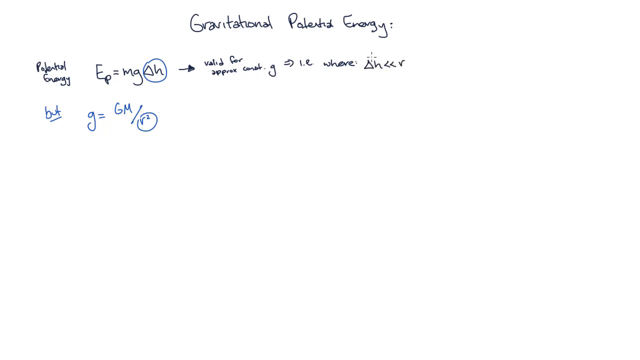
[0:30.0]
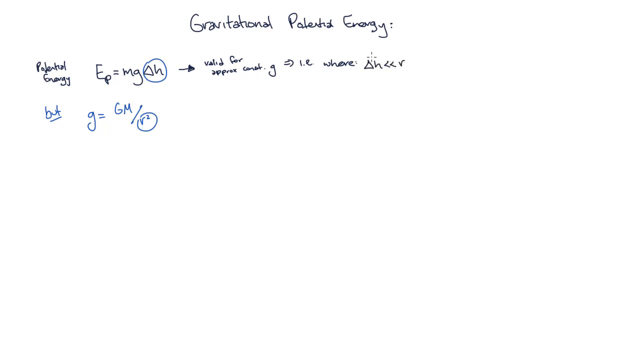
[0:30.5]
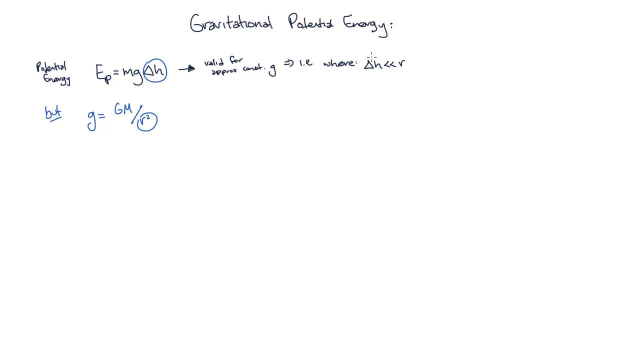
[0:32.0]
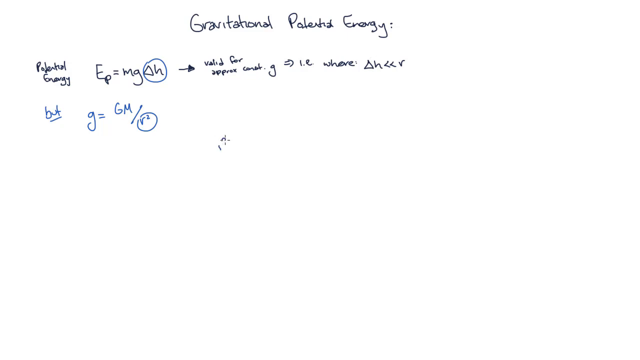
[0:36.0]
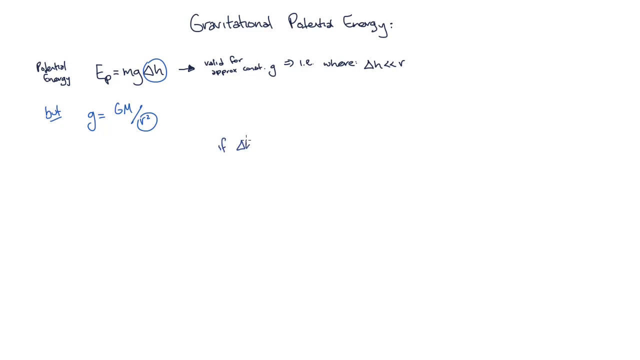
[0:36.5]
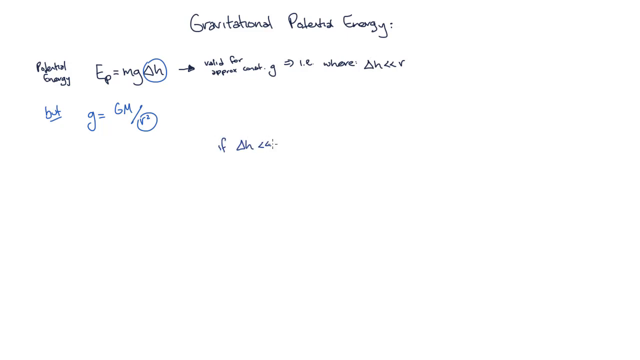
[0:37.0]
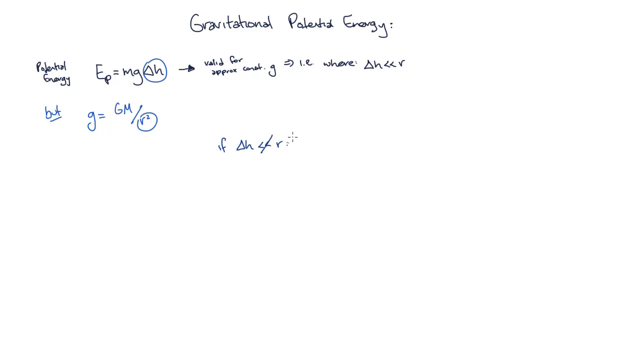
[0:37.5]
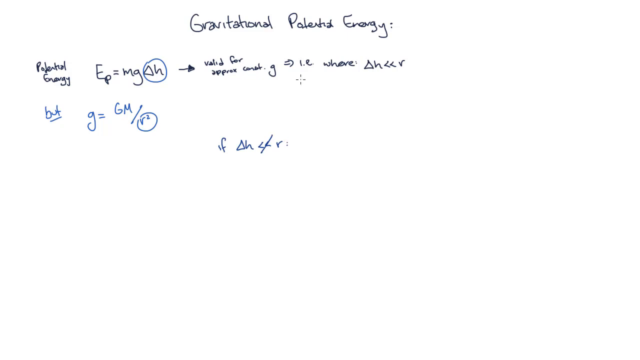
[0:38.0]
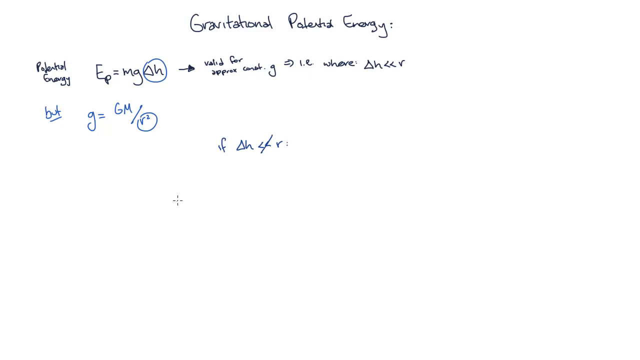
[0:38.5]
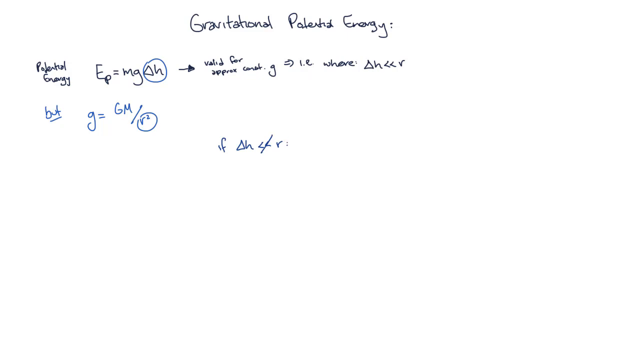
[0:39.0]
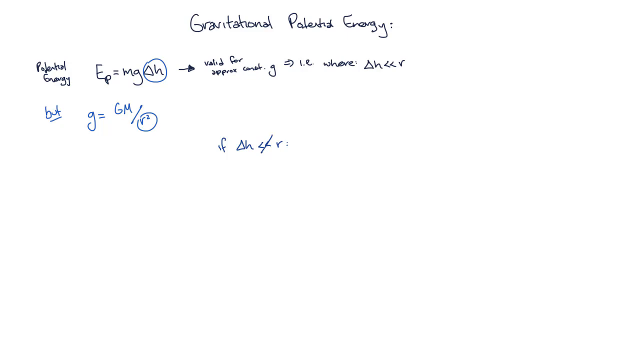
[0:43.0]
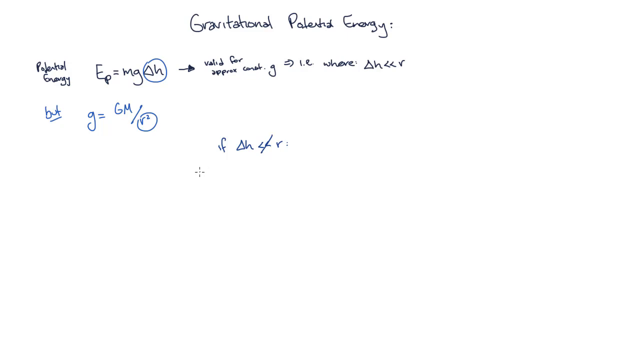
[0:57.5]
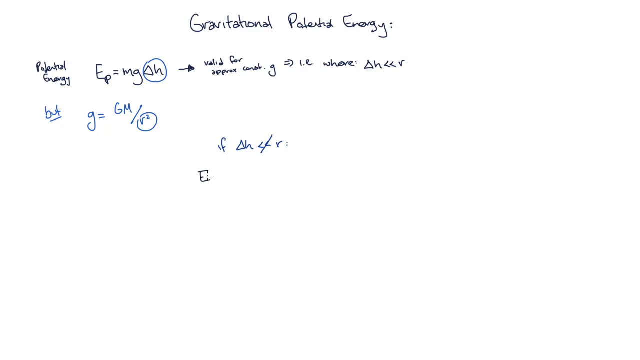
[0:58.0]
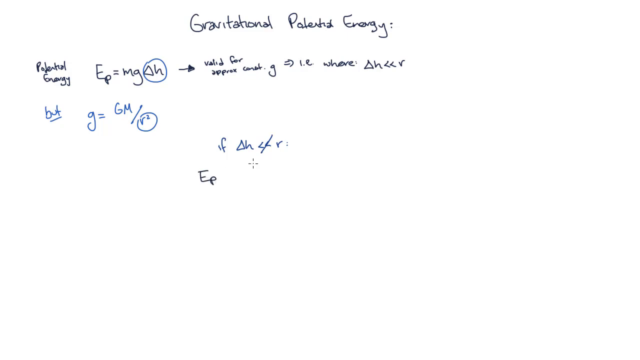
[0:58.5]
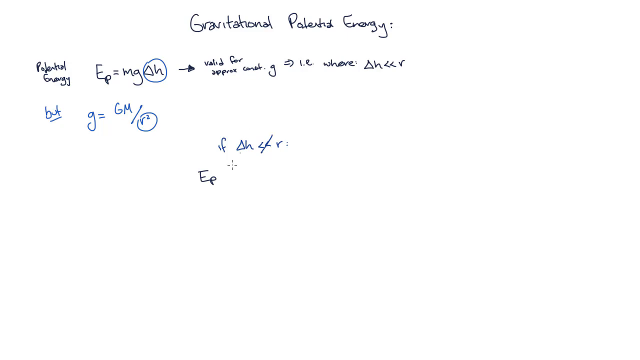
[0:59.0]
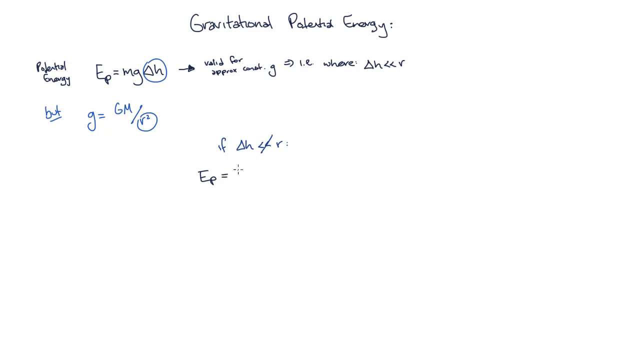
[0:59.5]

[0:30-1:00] The diagram shows key concepts of gravitational potential energy: position, height and mass, and the formula. It shows the formula for gravitational potential energy, where M stands for the mass of an object, g is the acceleration due to gravity, approximately 9.8 meters near Earth's surface, and h is the height of the object above the reference point.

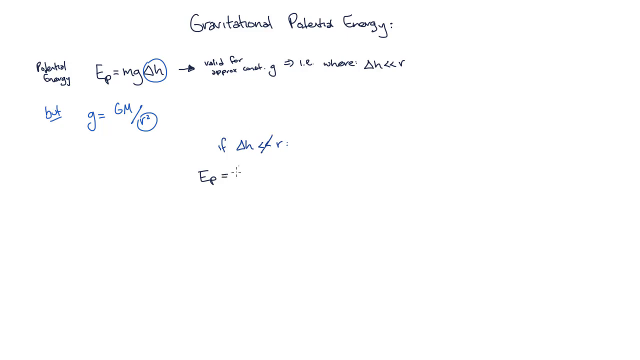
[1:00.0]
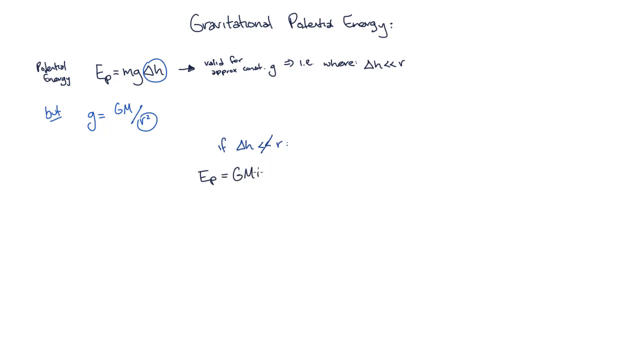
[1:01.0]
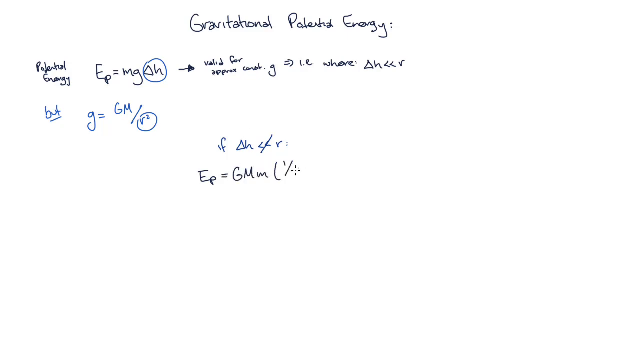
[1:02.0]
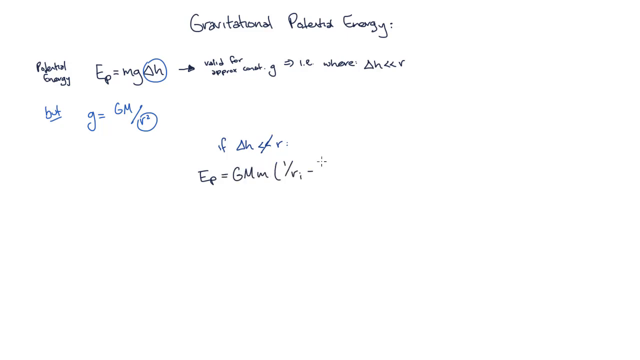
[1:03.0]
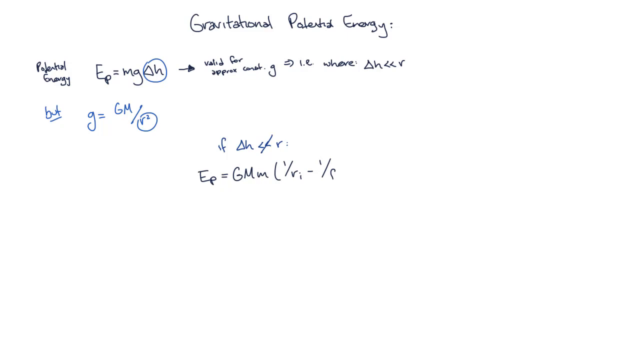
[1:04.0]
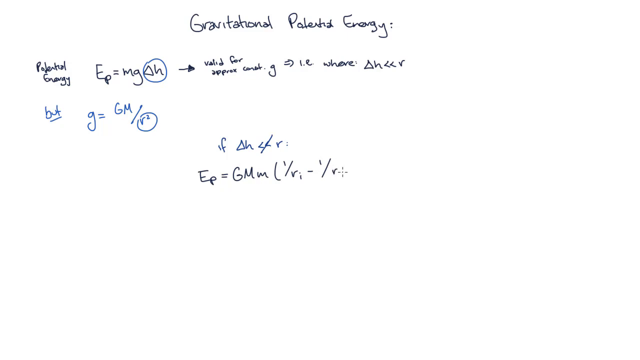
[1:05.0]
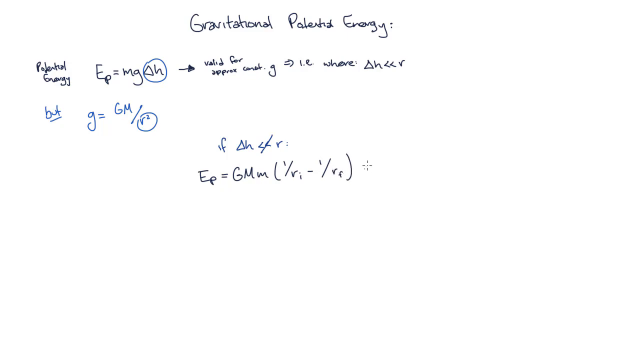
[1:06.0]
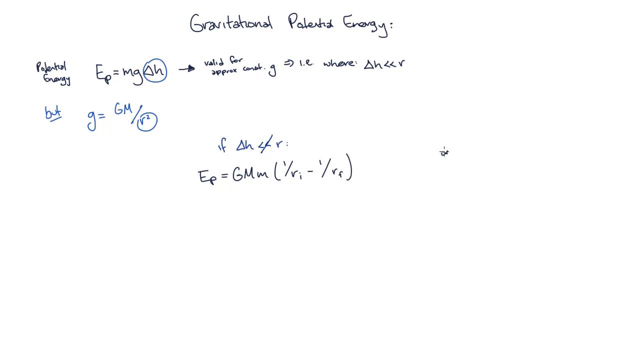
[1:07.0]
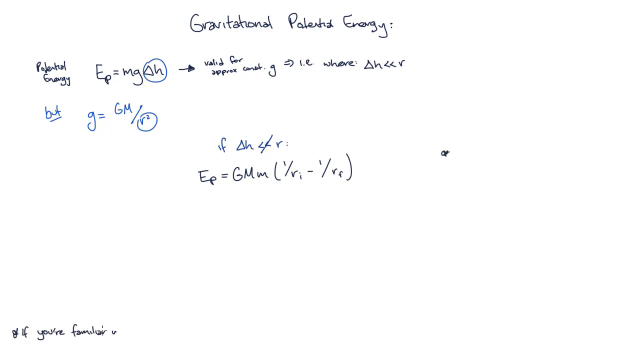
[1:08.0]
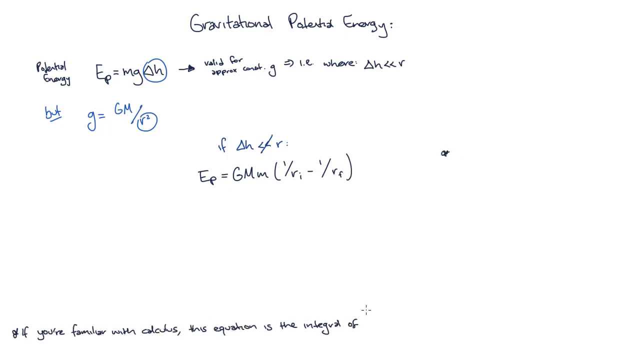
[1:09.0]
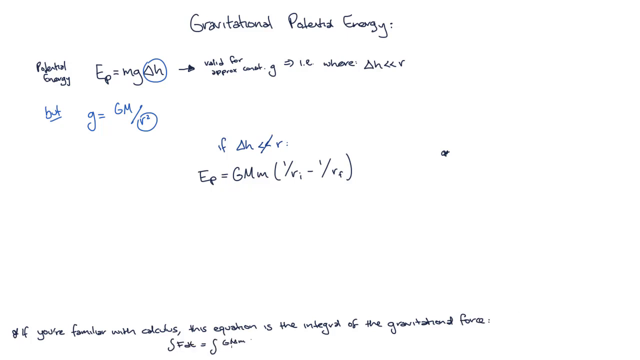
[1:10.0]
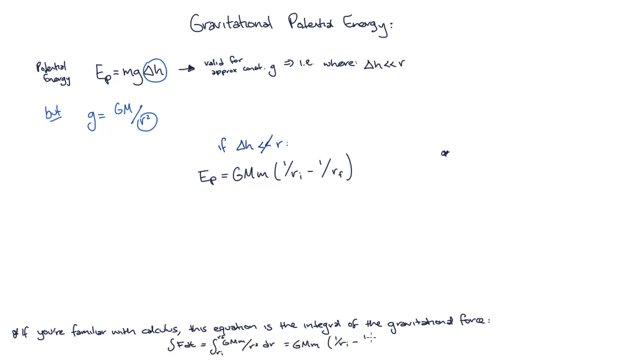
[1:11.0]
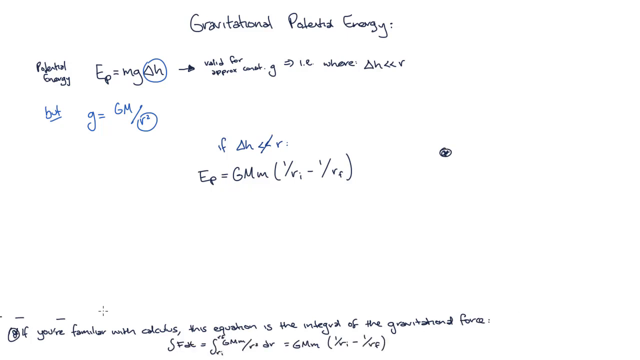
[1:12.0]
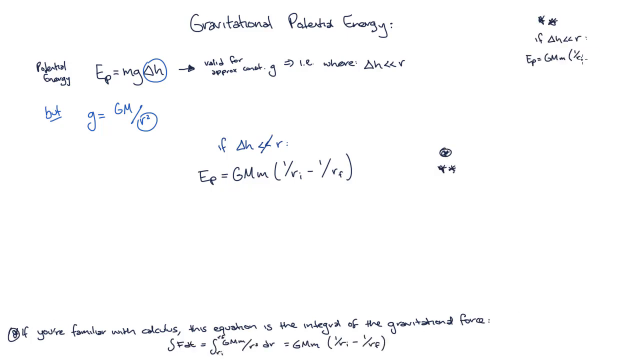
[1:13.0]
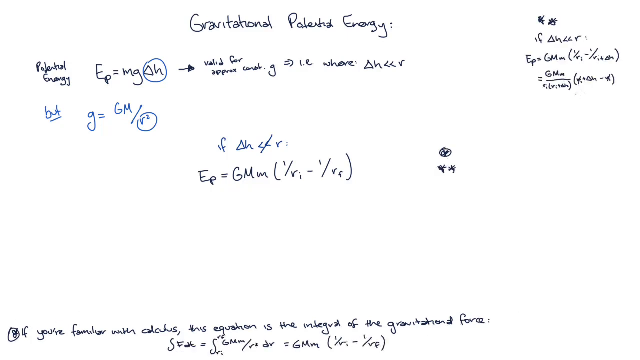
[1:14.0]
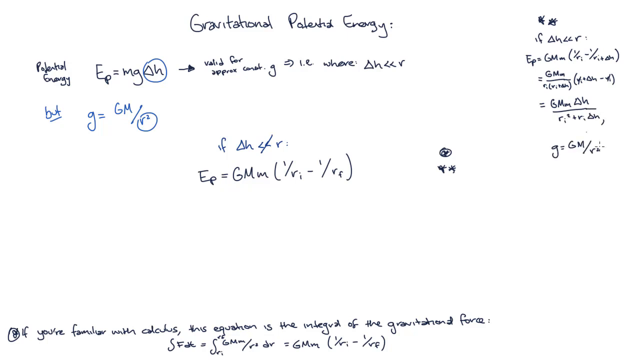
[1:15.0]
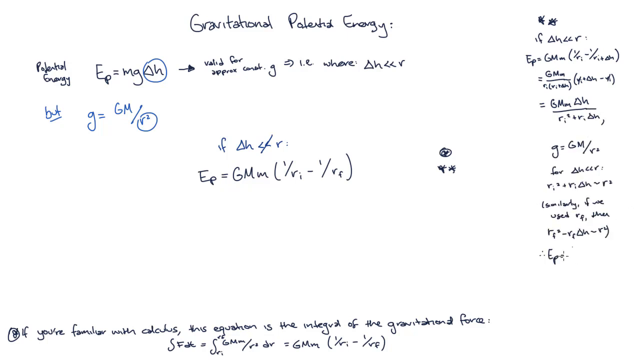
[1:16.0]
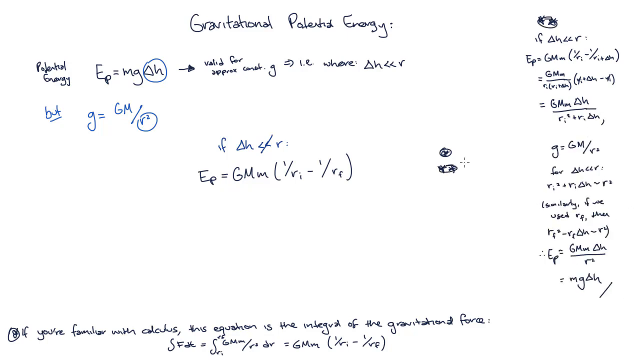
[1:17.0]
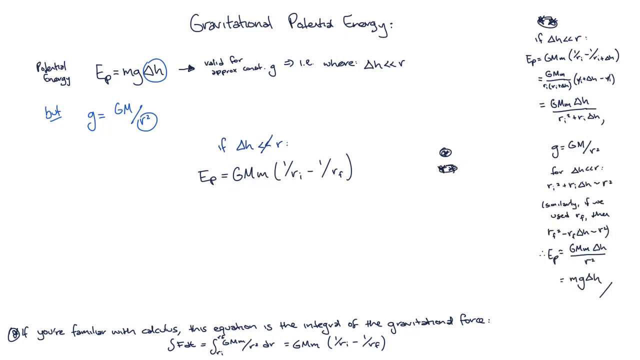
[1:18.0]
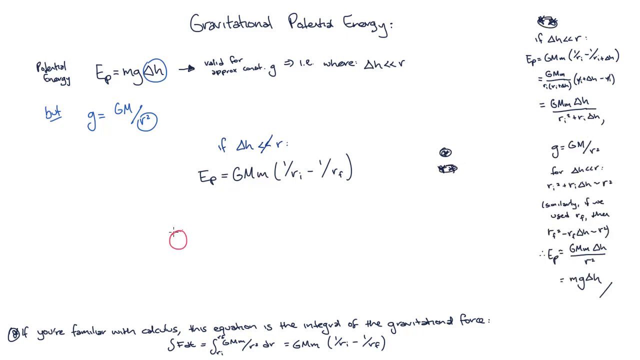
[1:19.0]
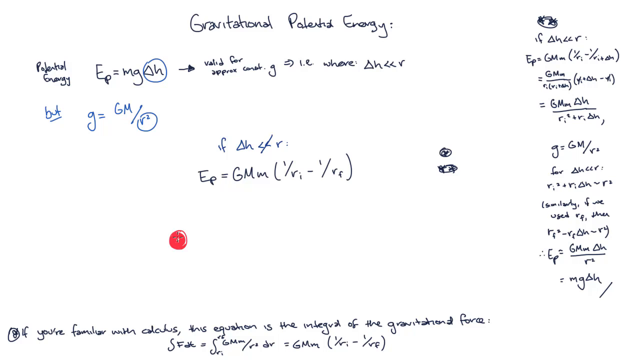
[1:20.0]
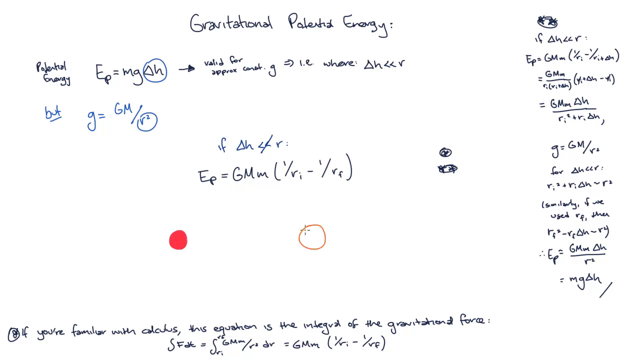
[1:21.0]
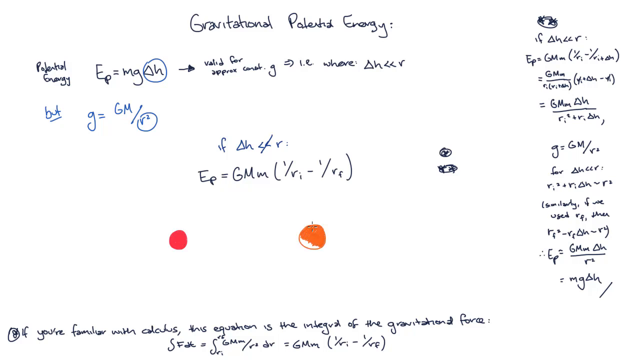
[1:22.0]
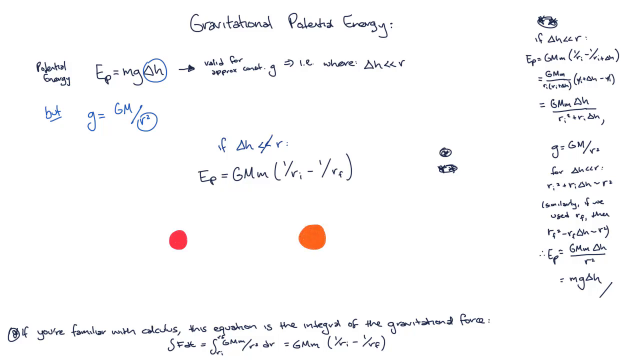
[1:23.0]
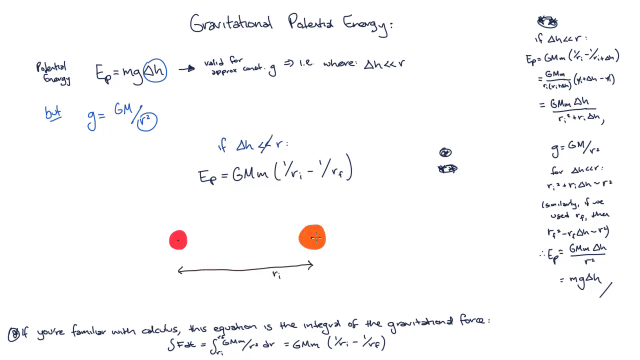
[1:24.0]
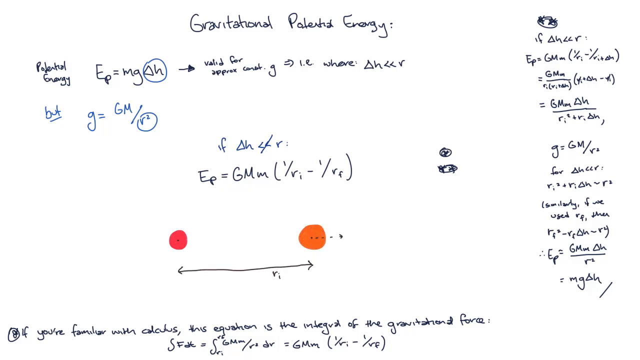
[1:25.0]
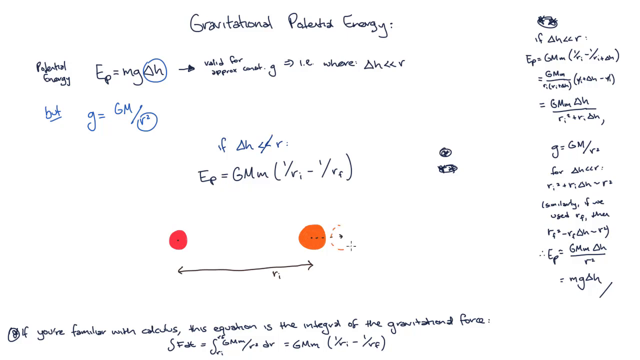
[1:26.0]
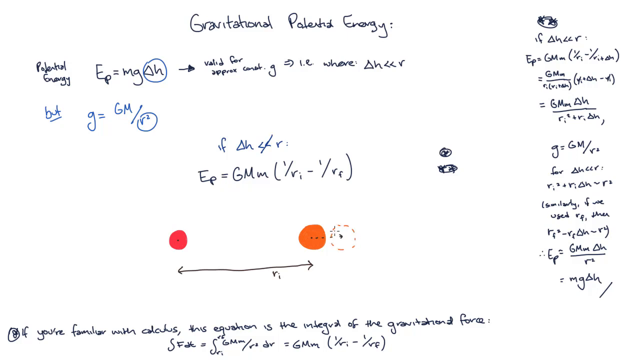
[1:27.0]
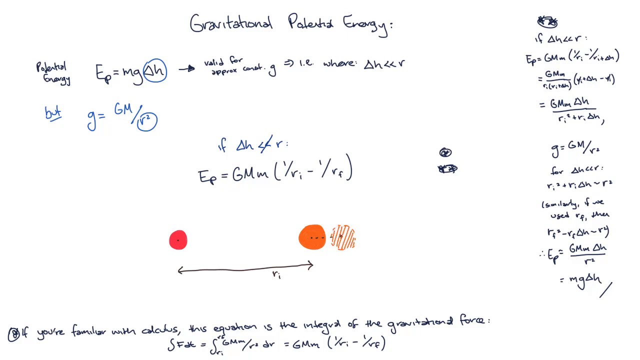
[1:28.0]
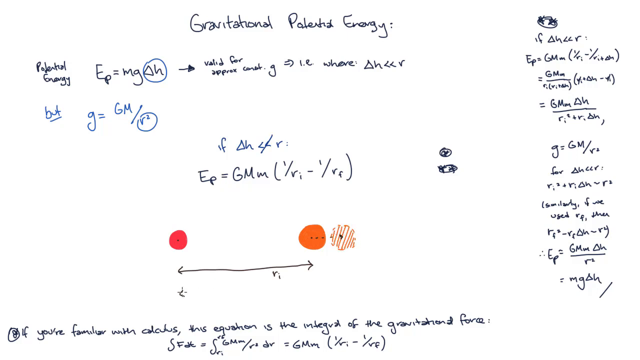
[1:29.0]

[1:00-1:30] Concepts about gravitational potential energy are on the screen, including that it is position-dependent, mass, and the formula. The diagram shows the formula GPE = MGH, where M is the mass, G is the acceleration due to gravity, approximately 9.8 near Earth's surface, and H is the height of the object above the reference point.